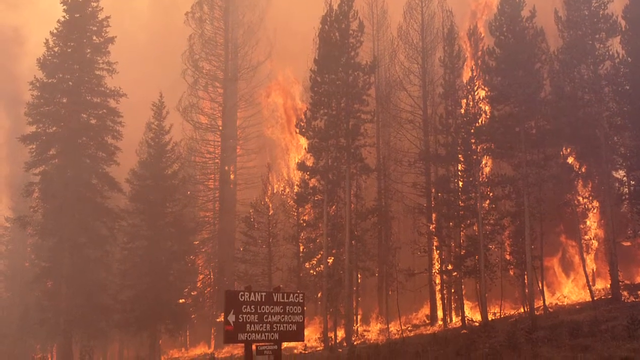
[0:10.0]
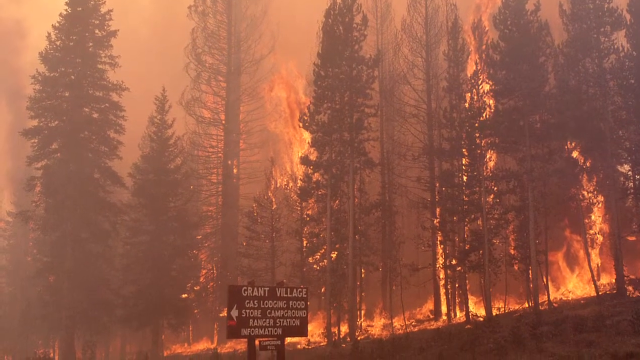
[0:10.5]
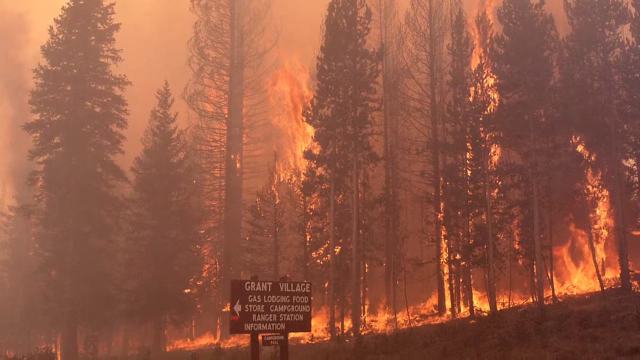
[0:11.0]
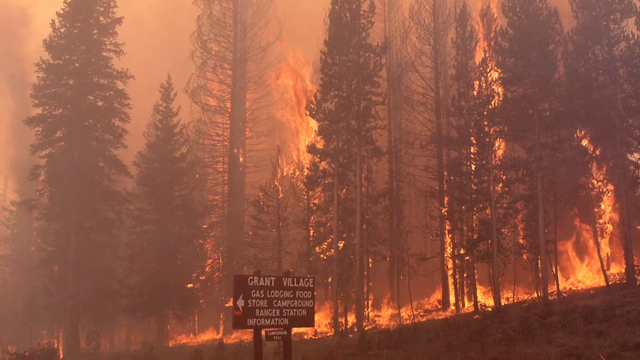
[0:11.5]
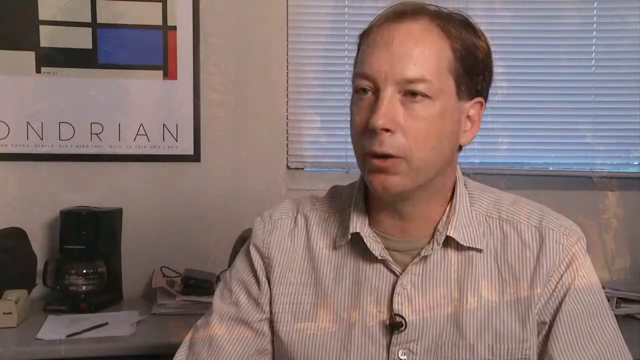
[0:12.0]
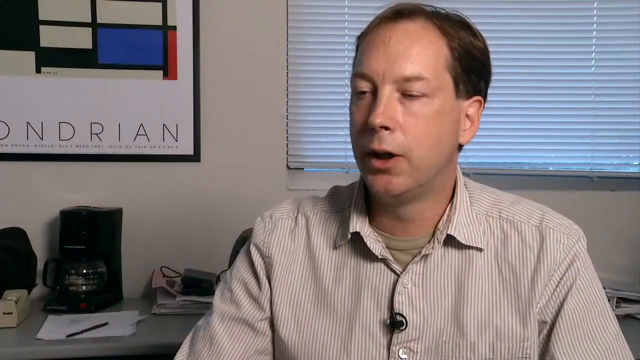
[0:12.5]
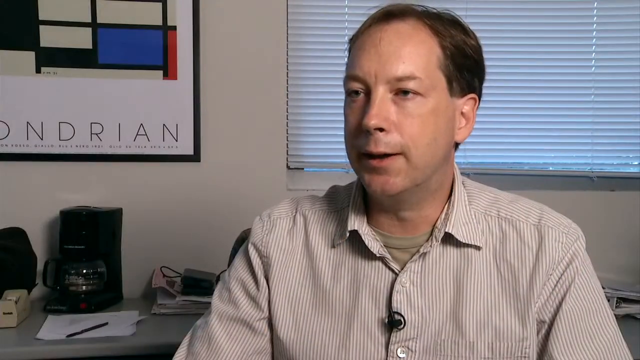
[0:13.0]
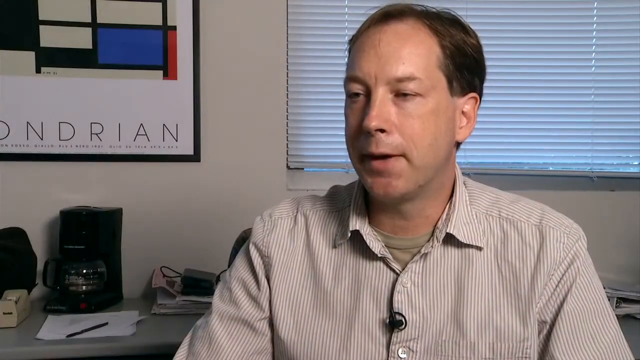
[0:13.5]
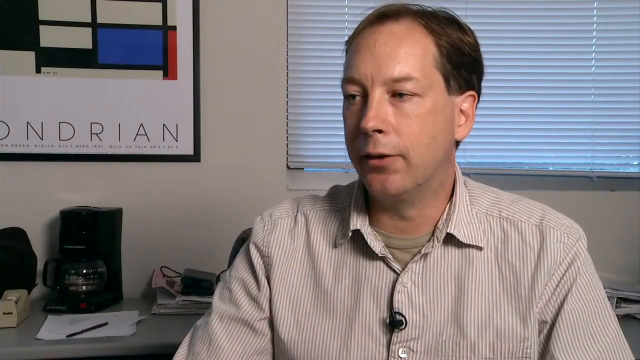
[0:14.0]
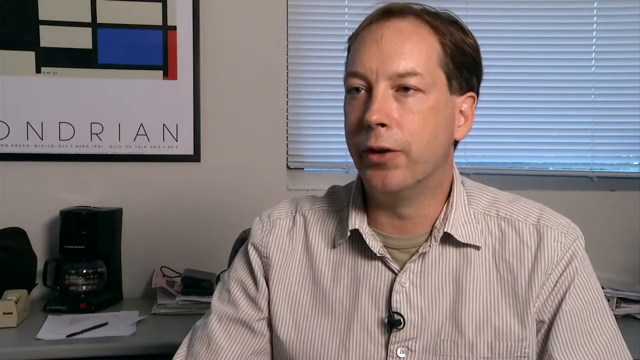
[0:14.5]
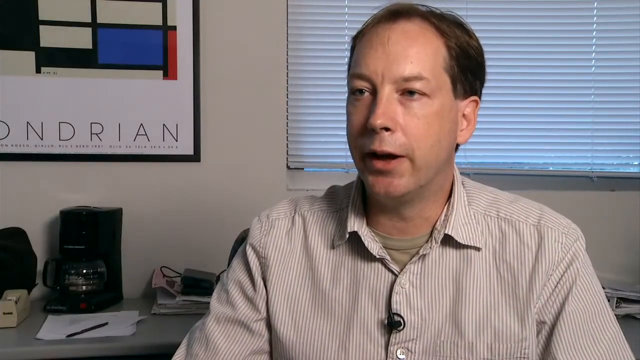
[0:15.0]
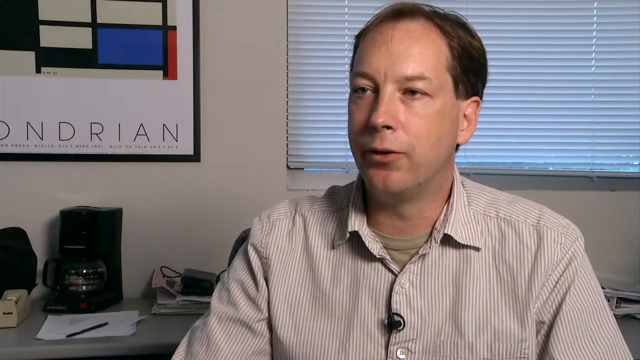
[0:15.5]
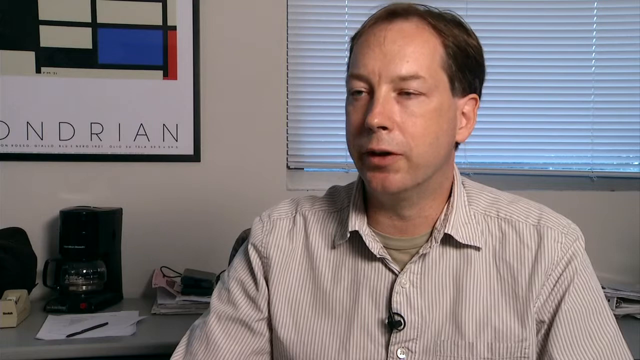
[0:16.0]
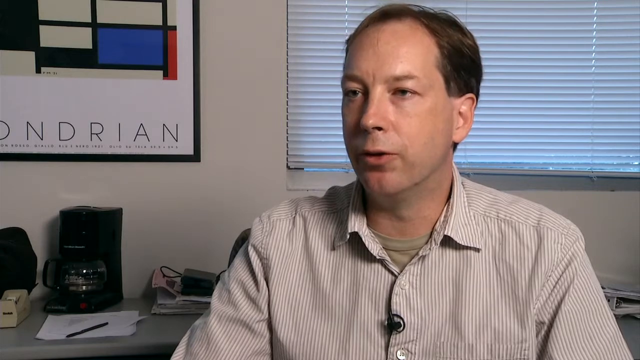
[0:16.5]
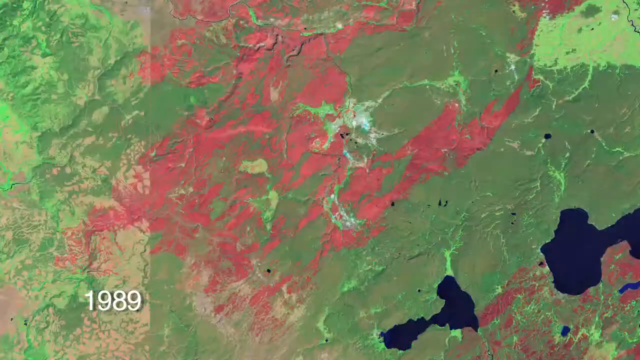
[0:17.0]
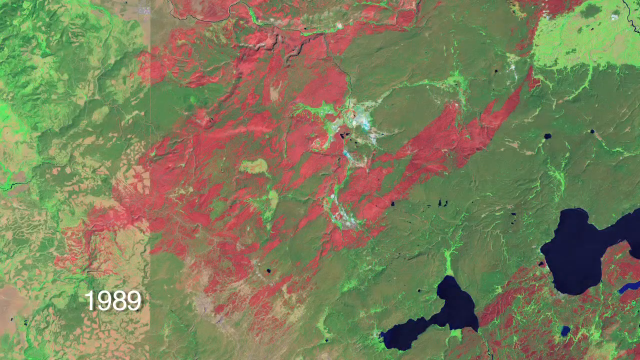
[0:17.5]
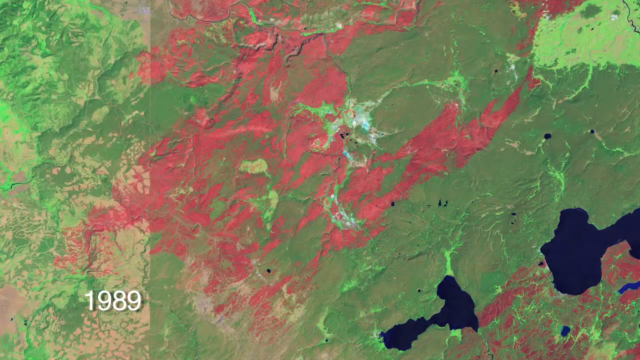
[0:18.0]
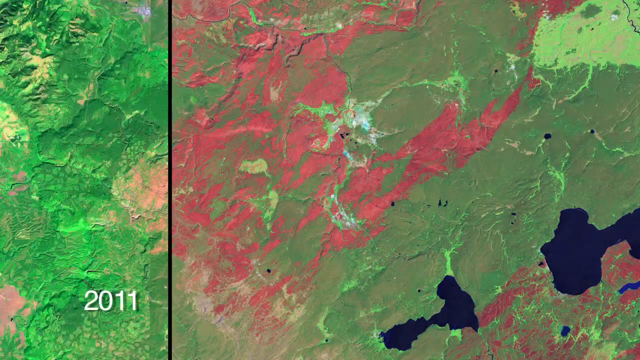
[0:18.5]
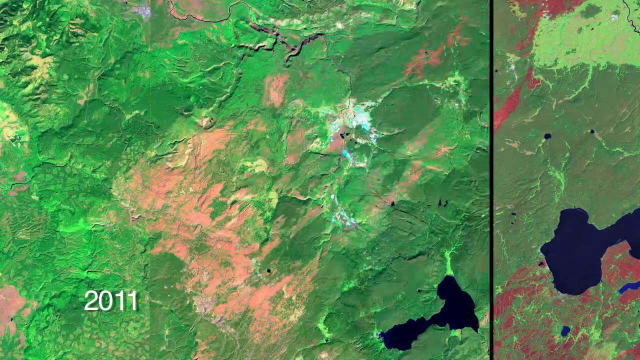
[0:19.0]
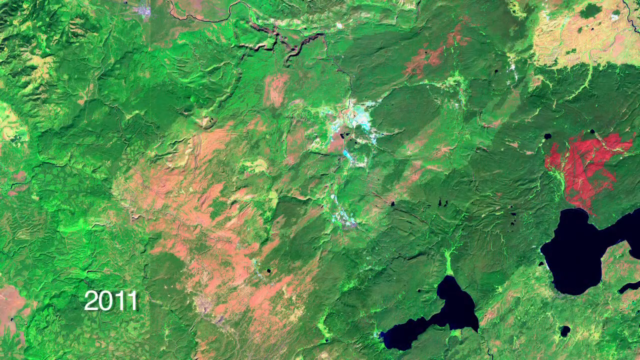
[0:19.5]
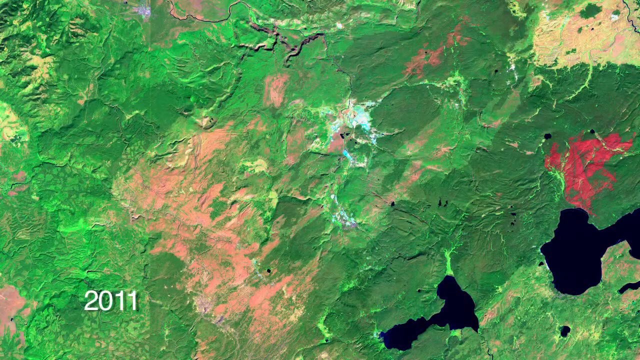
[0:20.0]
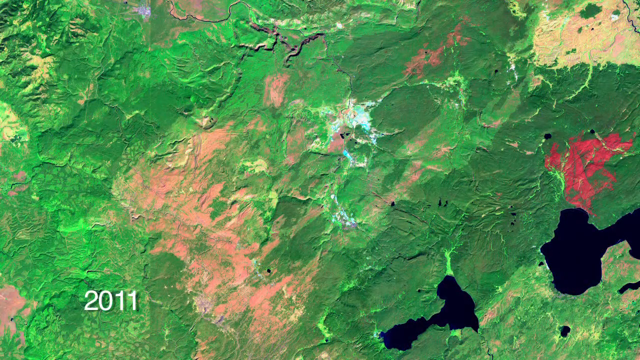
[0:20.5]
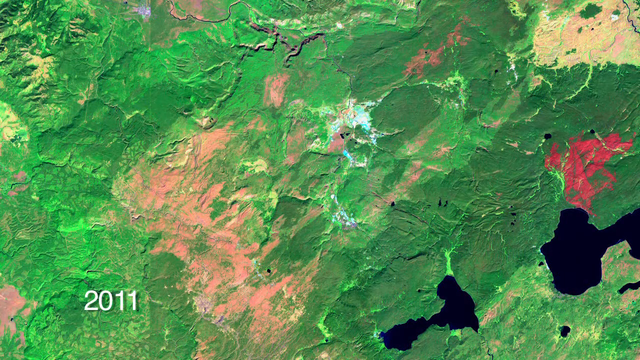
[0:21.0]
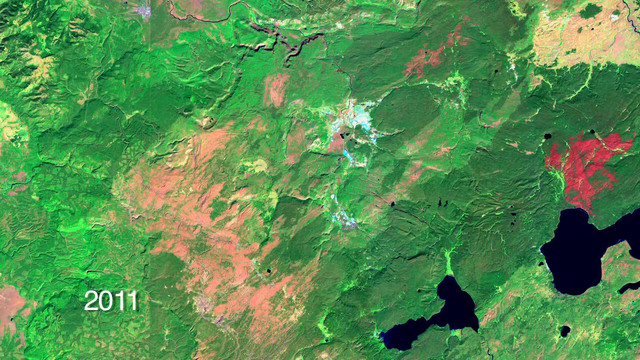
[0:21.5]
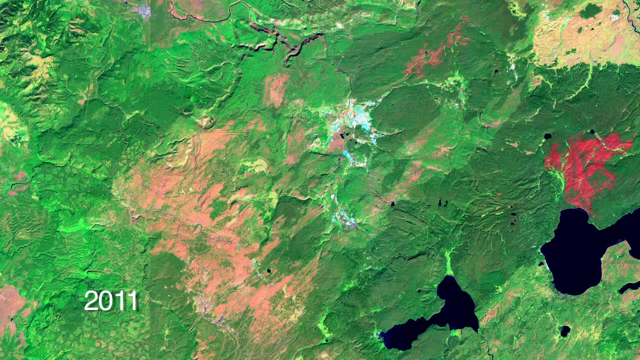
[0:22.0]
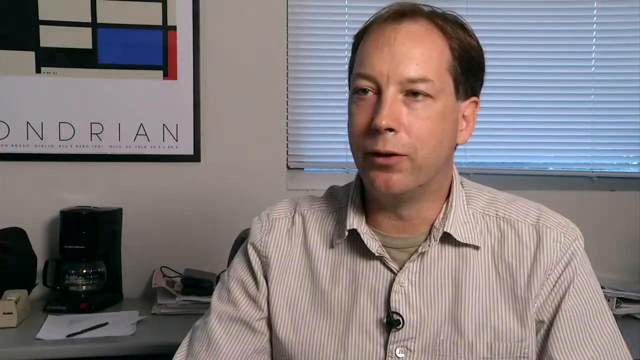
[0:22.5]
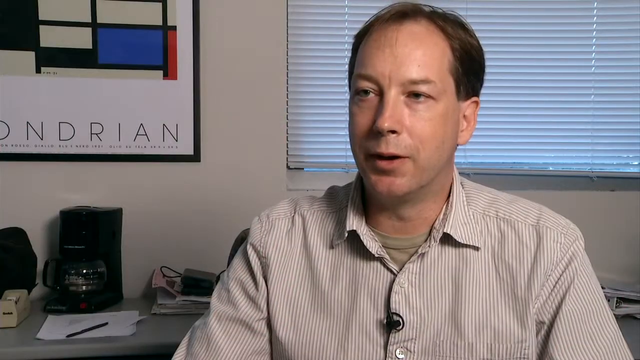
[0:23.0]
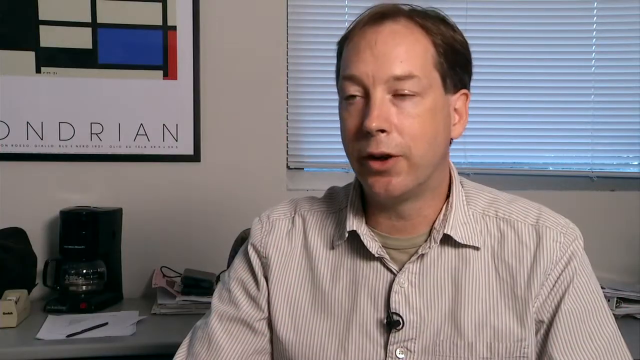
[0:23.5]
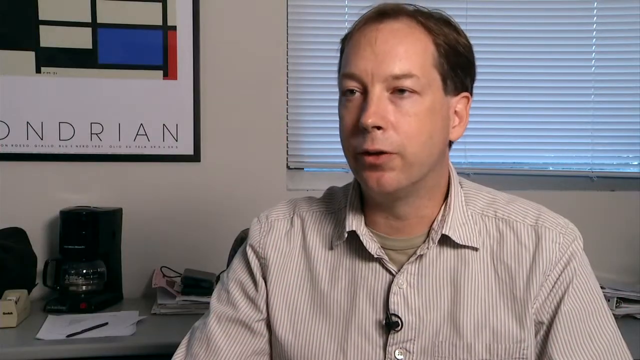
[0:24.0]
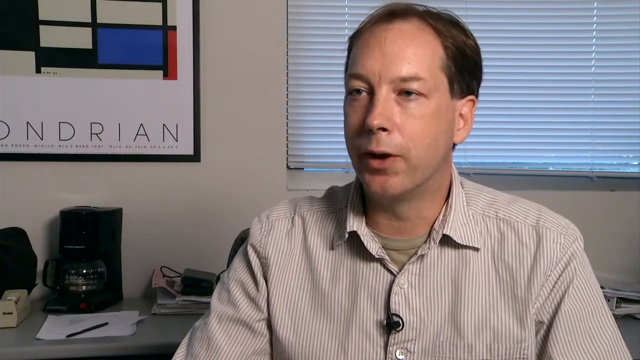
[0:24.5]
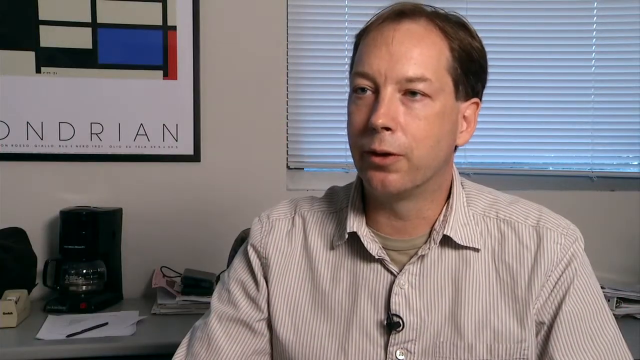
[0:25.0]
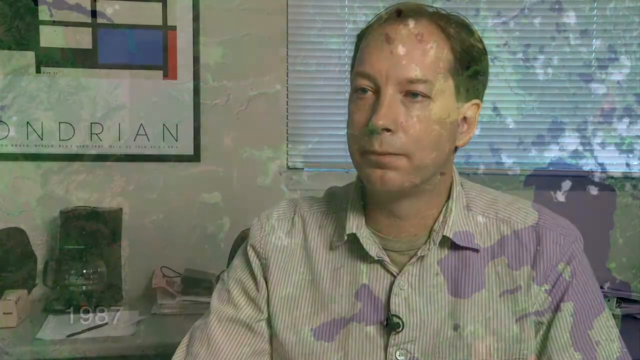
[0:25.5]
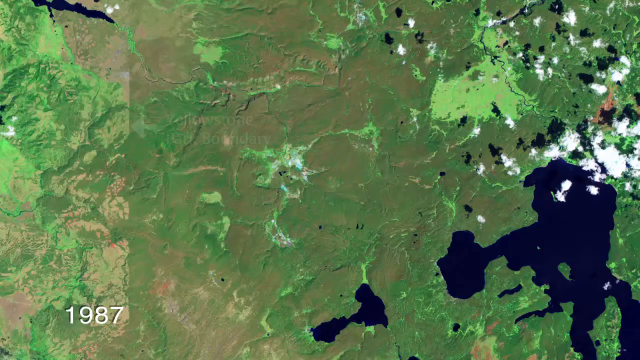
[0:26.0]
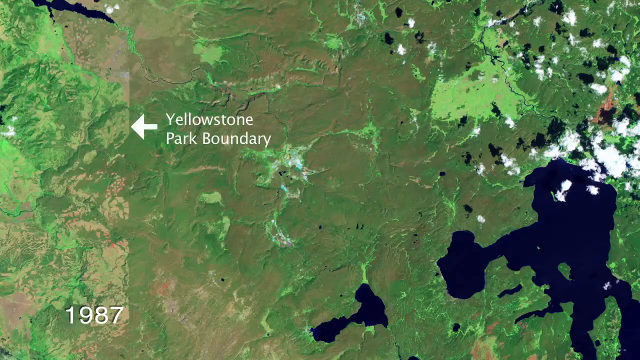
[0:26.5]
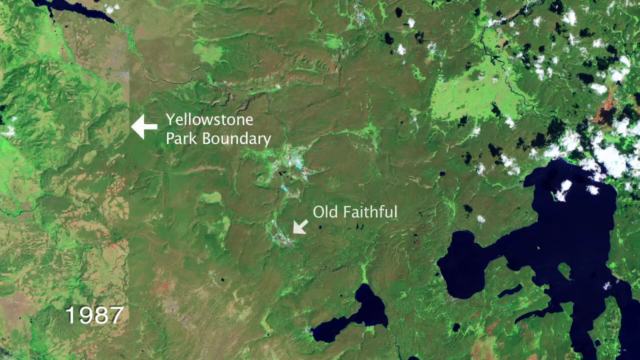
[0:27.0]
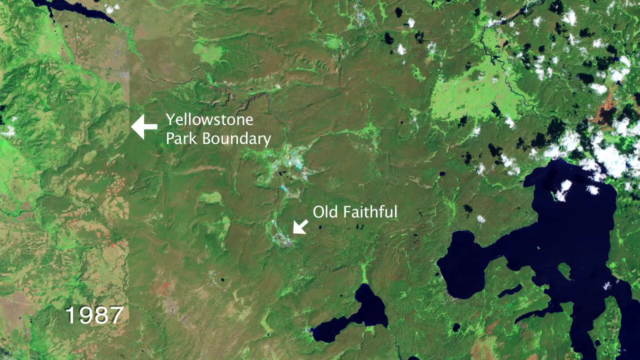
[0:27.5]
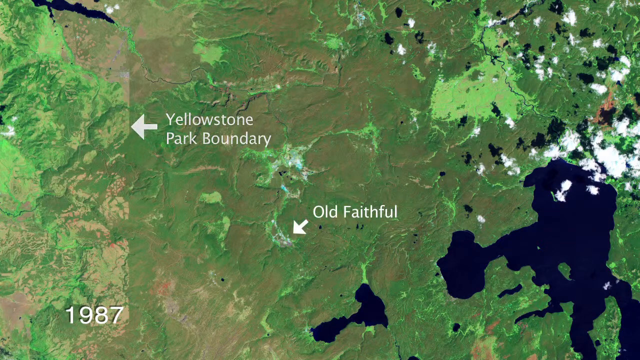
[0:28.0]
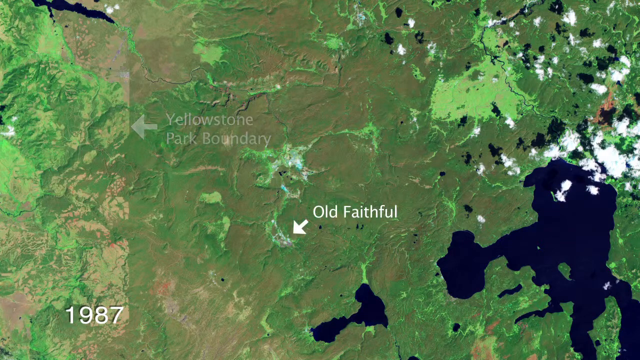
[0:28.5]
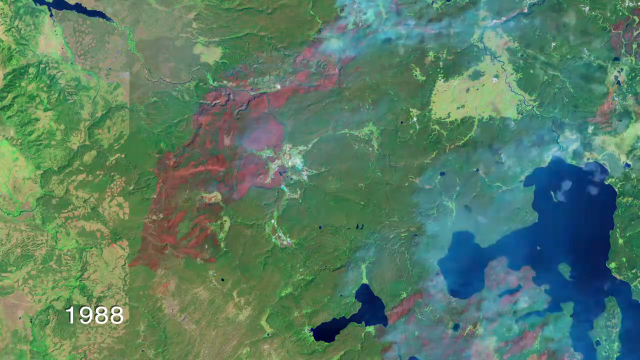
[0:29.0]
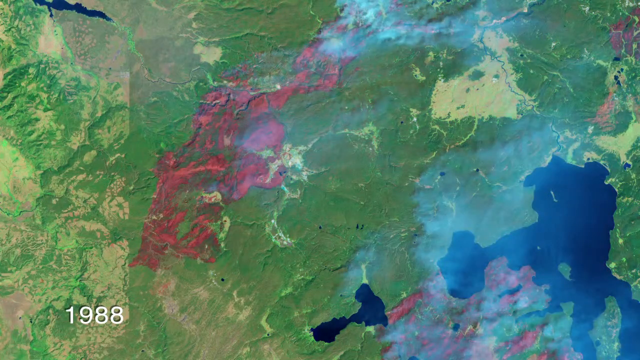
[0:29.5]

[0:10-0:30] A forest fire burns, with trees standing up and fire between them. At the bottom is a sign that says "Grant Village Gas Lodging Food", and the camera pans down somewhat to look at the sign more. The scene shifts to a white man in an office with a somewhat receding hairline. He wears a striped dress shirt with an open collar and a t-shirt visible underneath. Behind him is a window with blinds, a painting or some kind of picture on the wall, and a table with a coffee pot, a coffee maker, and books and papers piled on top of each other, along with a piece of paper with a pen on top of it. The man is talking to somebody. The scene changes to an overhead view of a map, probably of where the fire is raging, and a graphic of a black bar moving from left to right brings the view closer as the image is suddenly magnified. In the bottom left corner are numbers reading "2011". The video returns to the man, who blinks a lot and talks to the camera, looking off somewhat to the left. Then the overhead map view returns, with white text reading "Yellowstone Park Boundary" and an arrow pointing to the left, and another arrow labeled "Old Faithful" appears right above it in the center of the screen.